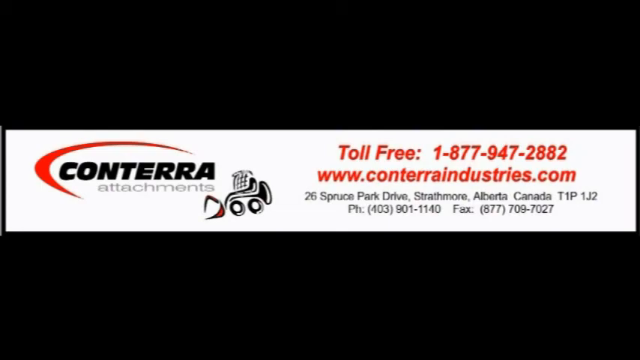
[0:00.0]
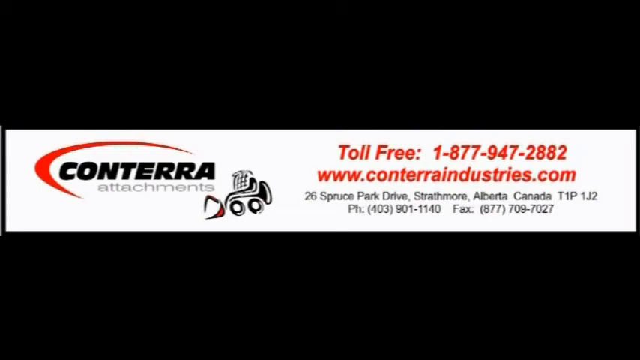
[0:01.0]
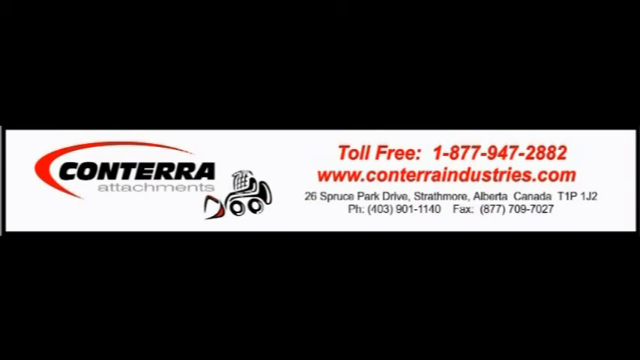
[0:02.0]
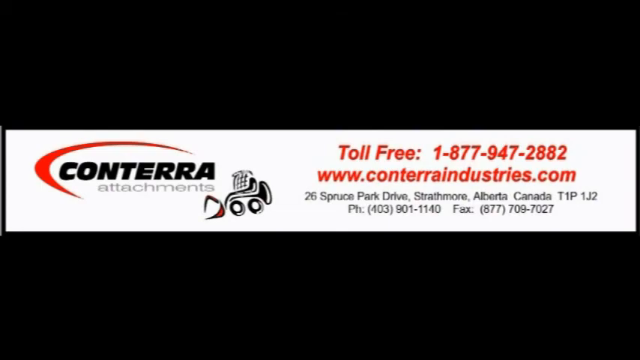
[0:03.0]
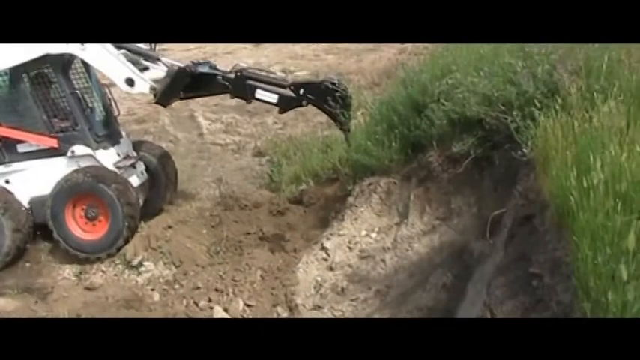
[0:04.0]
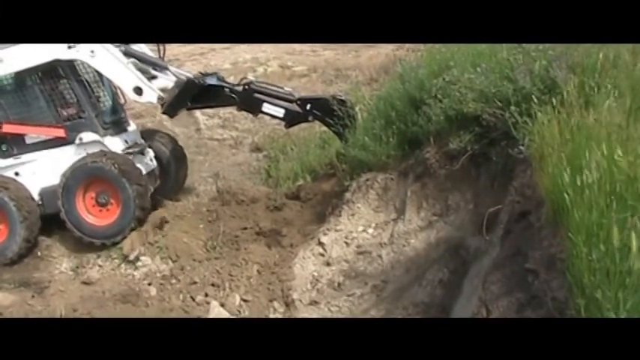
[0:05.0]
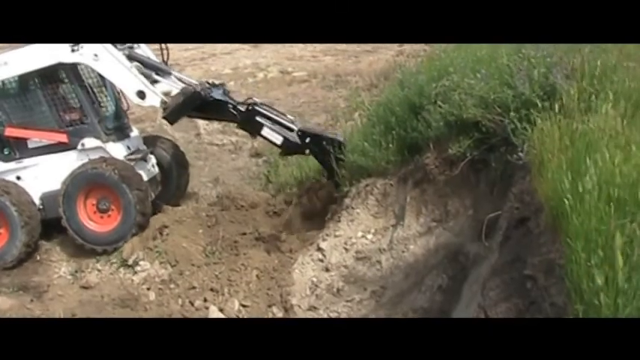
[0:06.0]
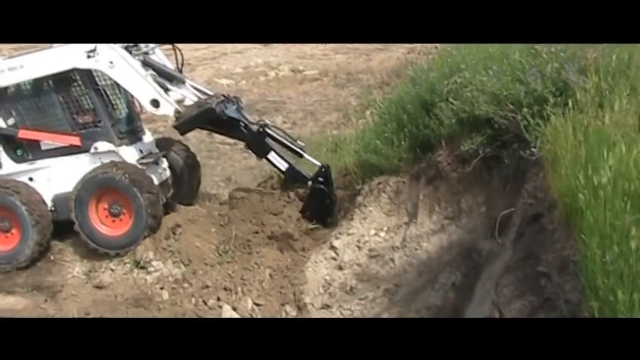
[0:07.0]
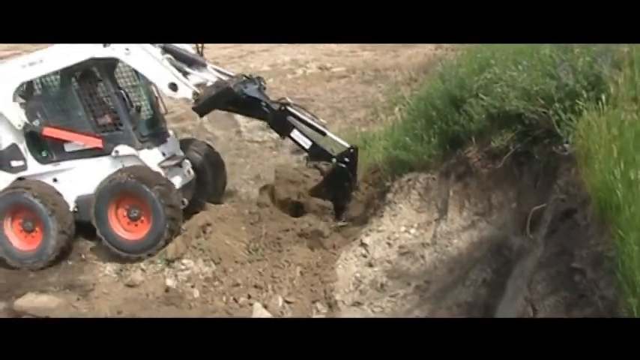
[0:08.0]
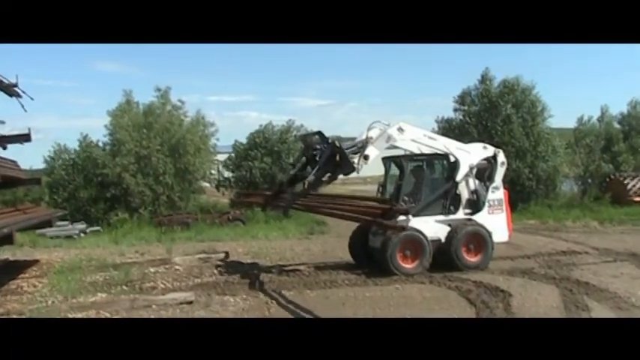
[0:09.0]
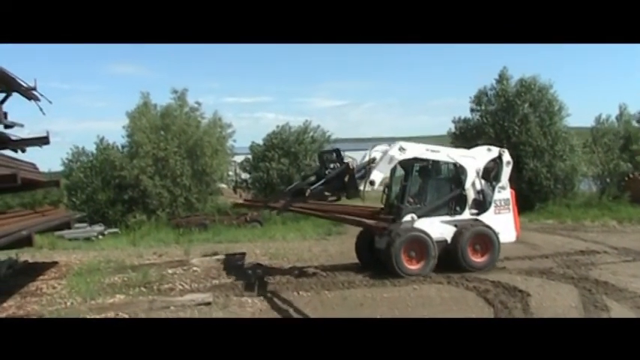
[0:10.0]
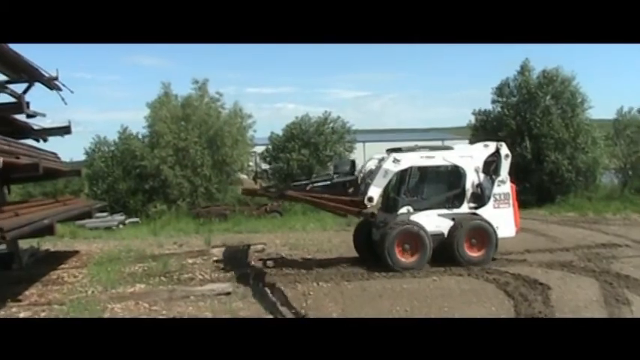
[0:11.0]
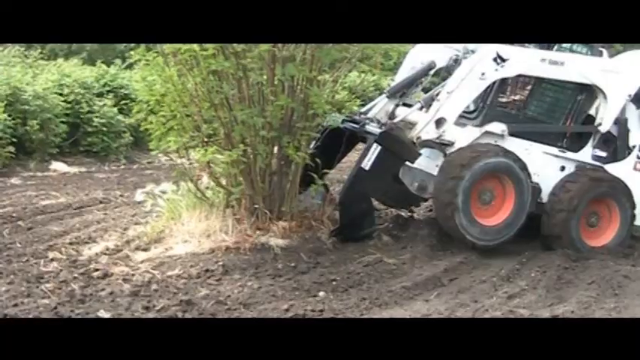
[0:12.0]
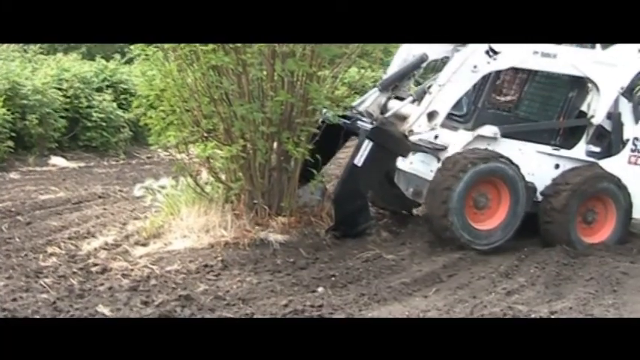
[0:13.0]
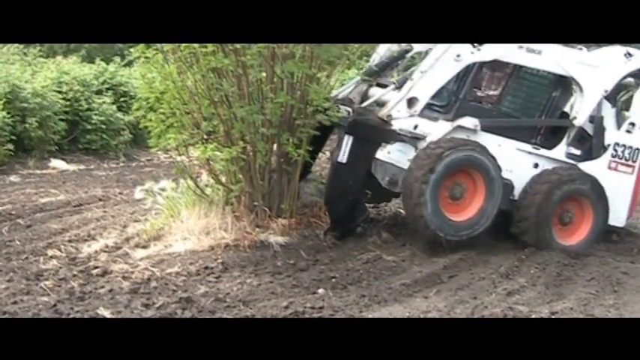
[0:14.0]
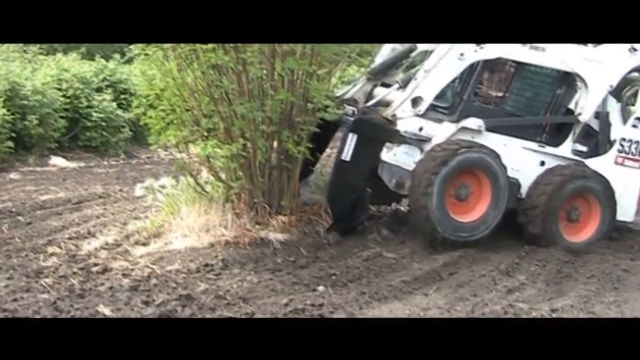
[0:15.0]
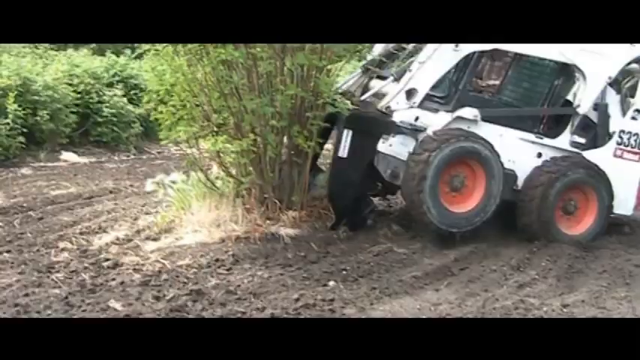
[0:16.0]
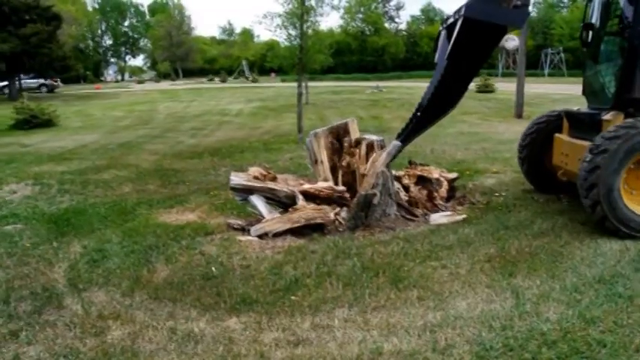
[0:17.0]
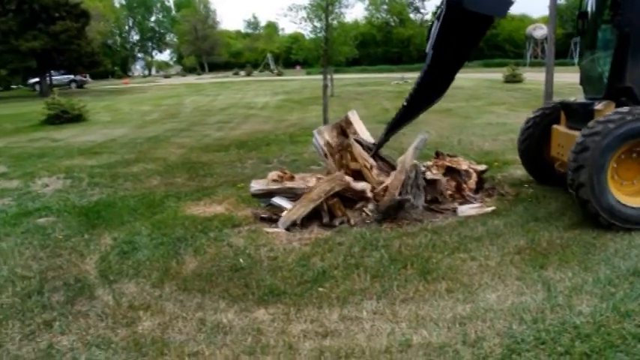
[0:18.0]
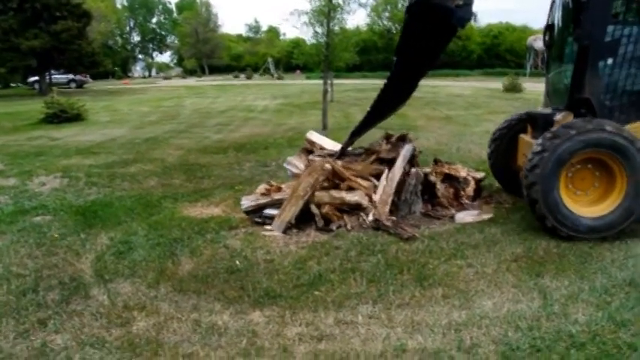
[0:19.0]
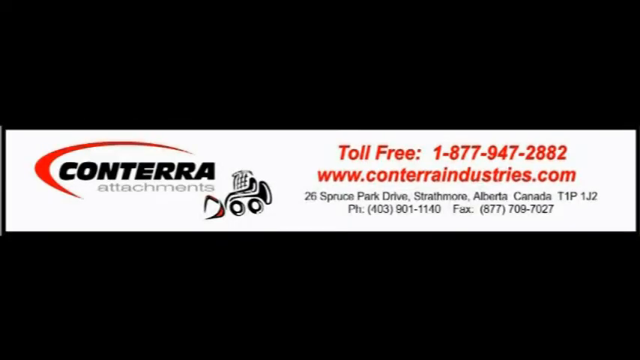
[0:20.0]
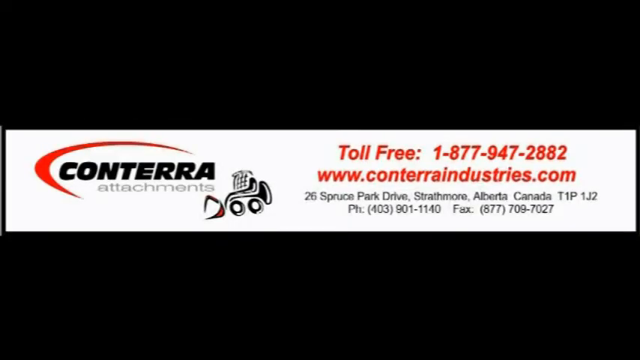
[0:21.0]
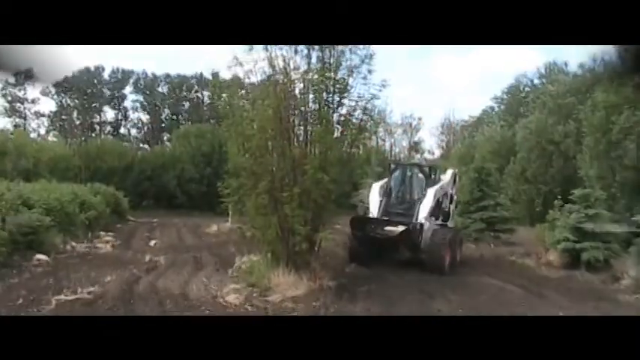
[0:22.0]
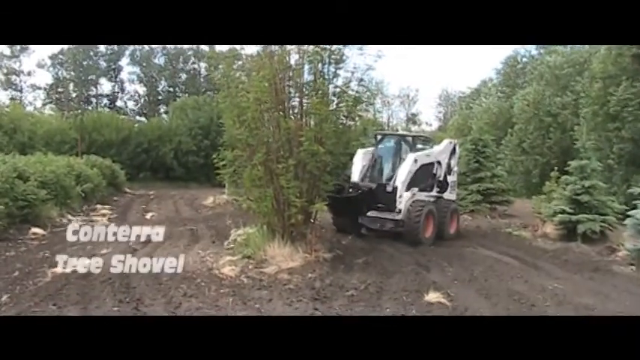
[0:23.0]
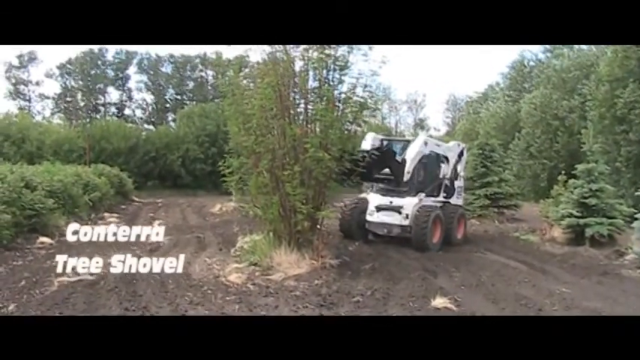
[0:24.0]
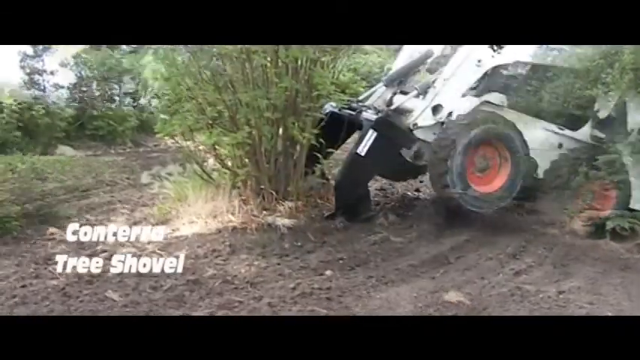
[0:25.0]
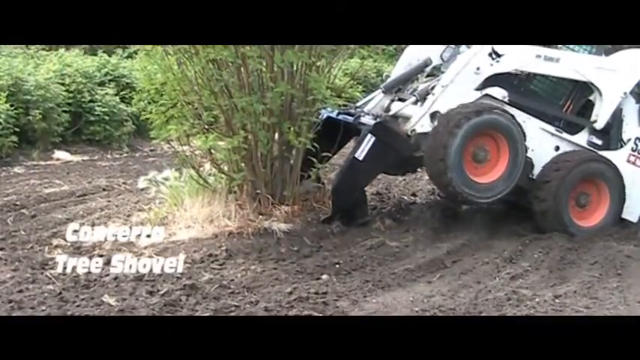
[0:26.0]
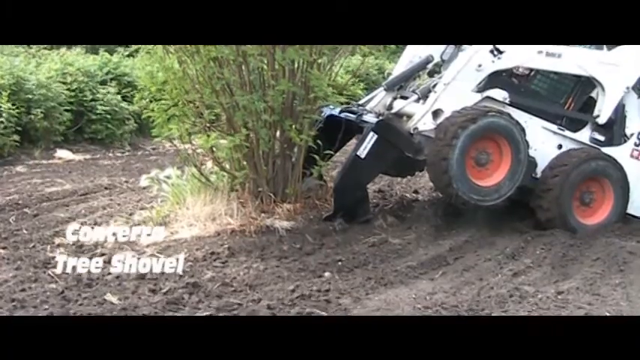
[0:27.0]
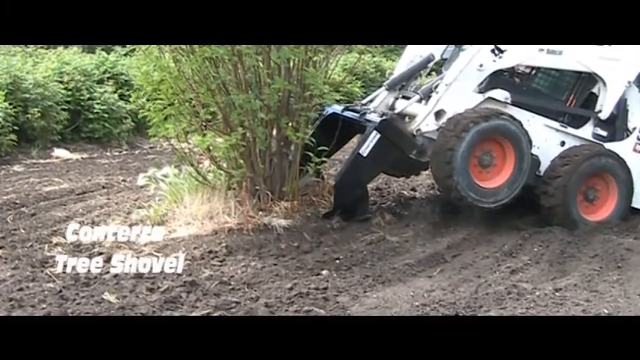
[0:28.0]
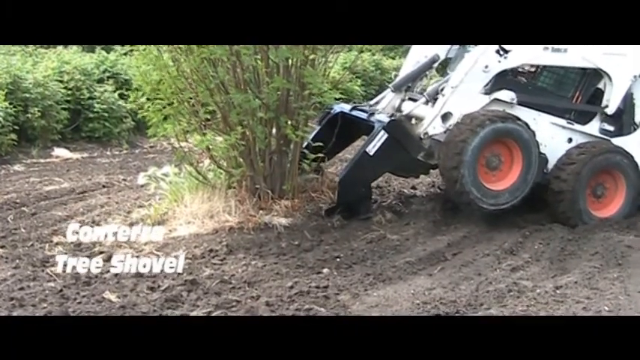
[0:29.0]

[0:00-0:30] A card reads "Conterra attachments", with a picture of a little bulldozer next to it. The text reads "toll free 1-877-947-2882 www.conterraindustries.com, 26 Bruce Park, Strathmore, Alberta, Canada, T1P, phone 403-901-1140" along with a fax number. It appears as a white strip on a black background. A little white backhoe then does some digging. Another machine lifts something heavy, like rebar or metal pipes. Another digs out a tree, with some tree trunks around, and another bulldozes through a tree trunk, clearing tree trunks out of the way. Text then reads "Conterra tree shovel". A white backhoe or some kind of machinery is shown with different attachments for different tasks.